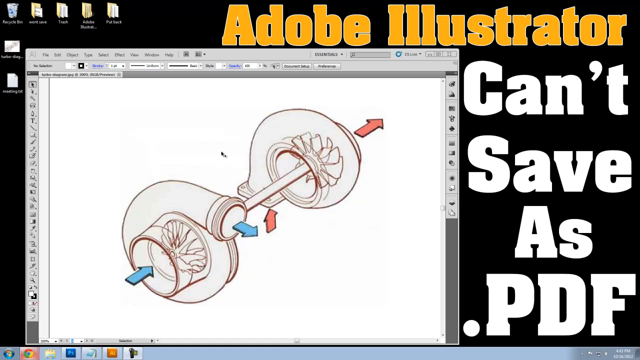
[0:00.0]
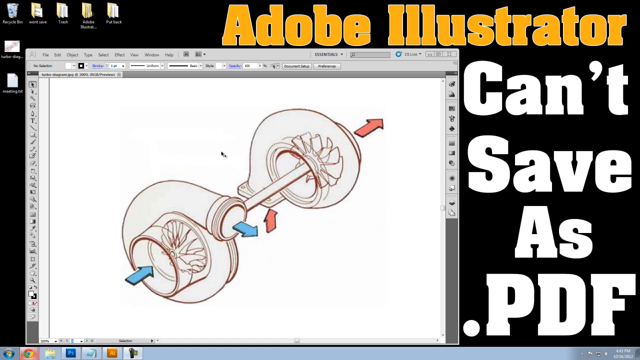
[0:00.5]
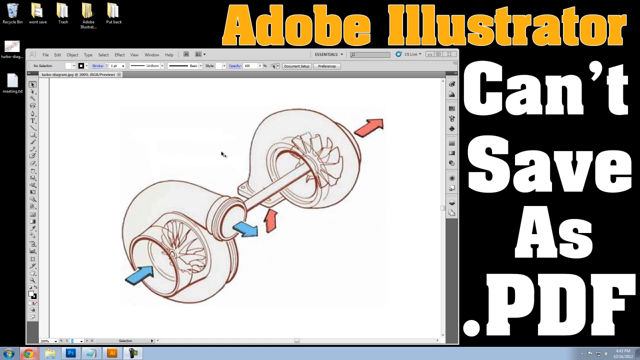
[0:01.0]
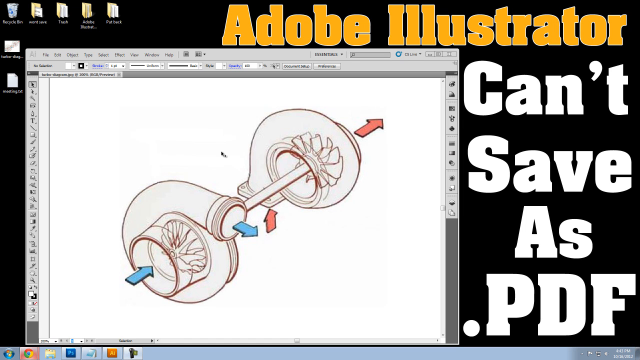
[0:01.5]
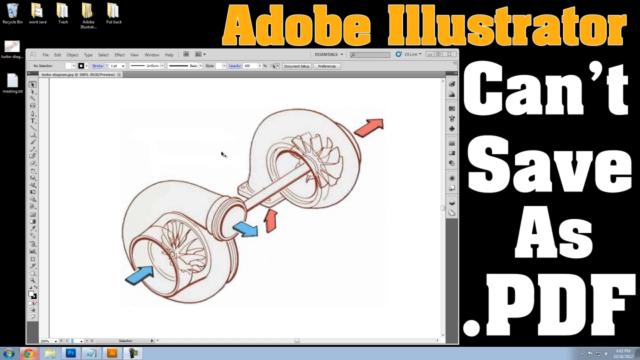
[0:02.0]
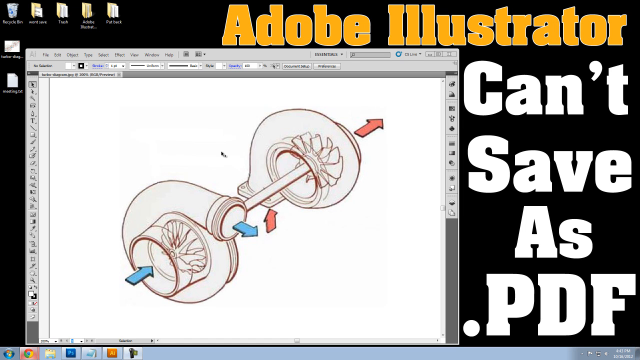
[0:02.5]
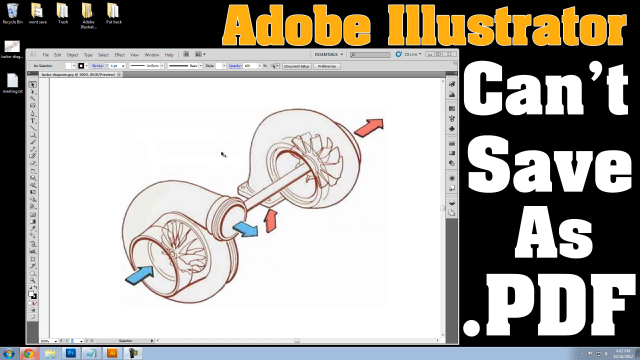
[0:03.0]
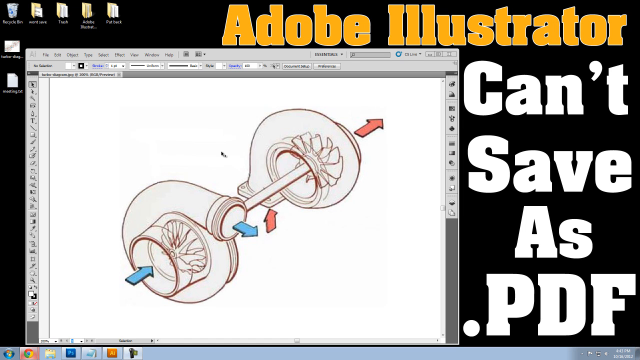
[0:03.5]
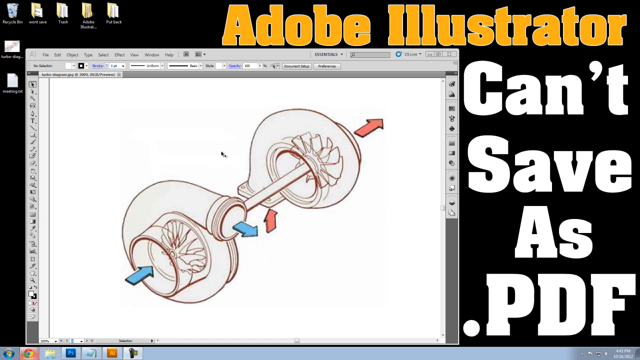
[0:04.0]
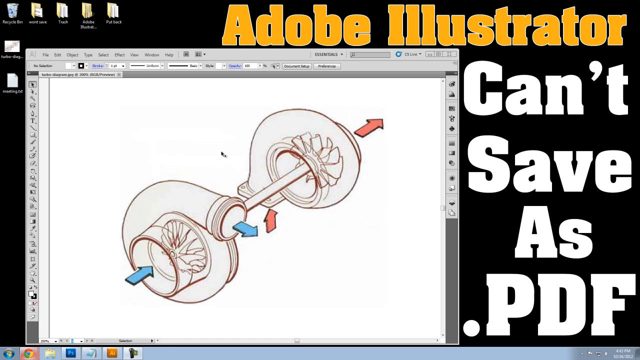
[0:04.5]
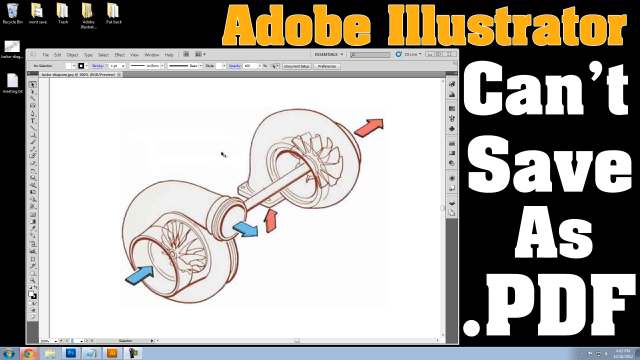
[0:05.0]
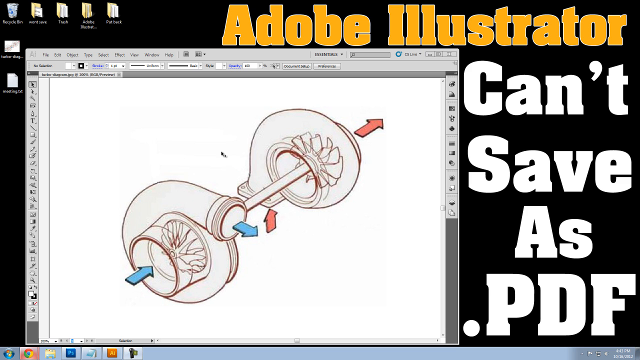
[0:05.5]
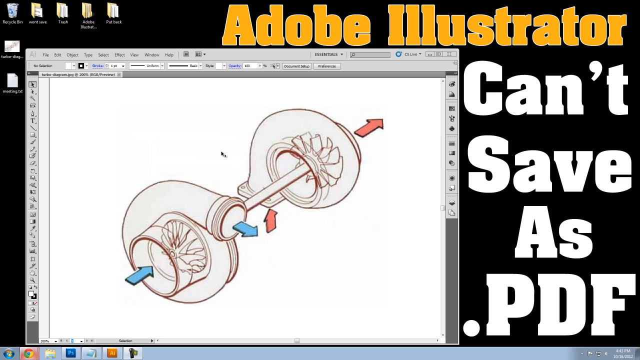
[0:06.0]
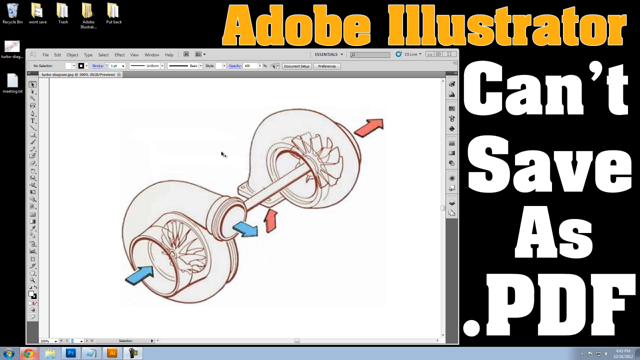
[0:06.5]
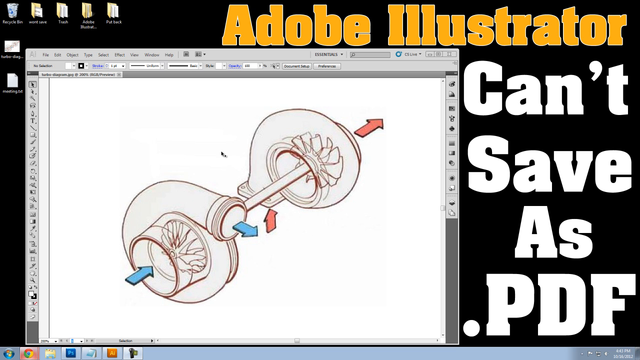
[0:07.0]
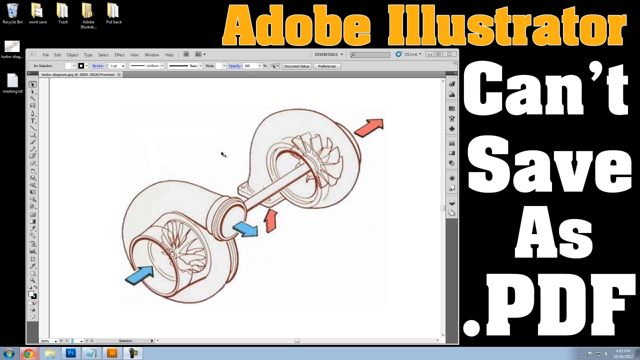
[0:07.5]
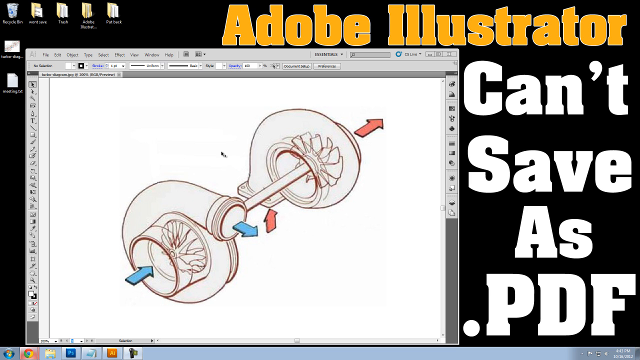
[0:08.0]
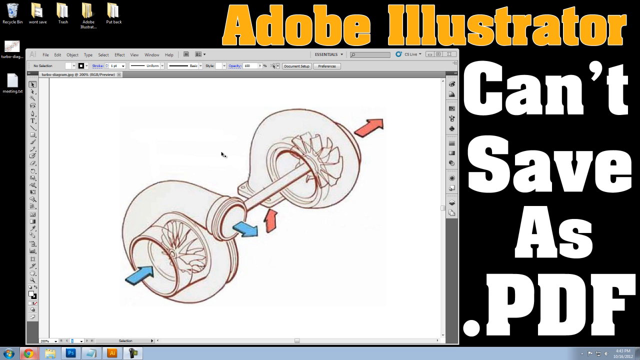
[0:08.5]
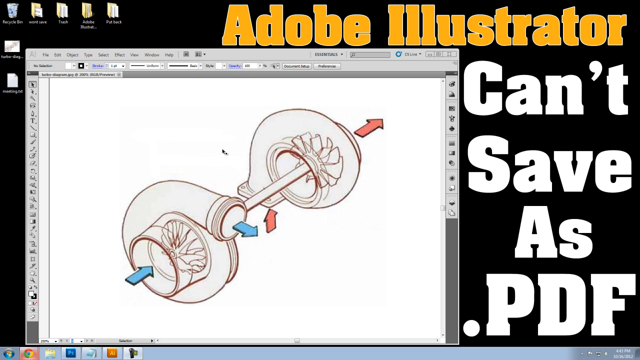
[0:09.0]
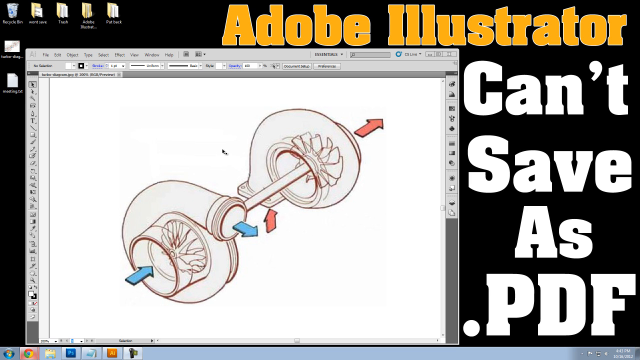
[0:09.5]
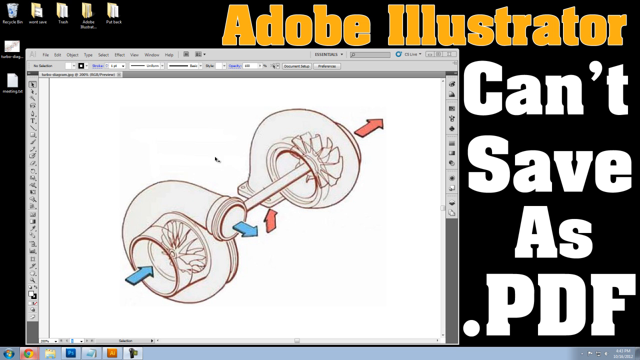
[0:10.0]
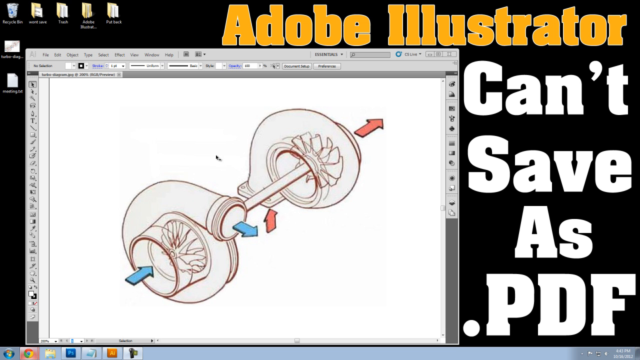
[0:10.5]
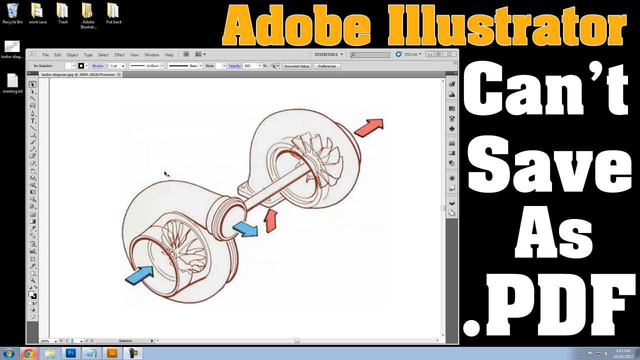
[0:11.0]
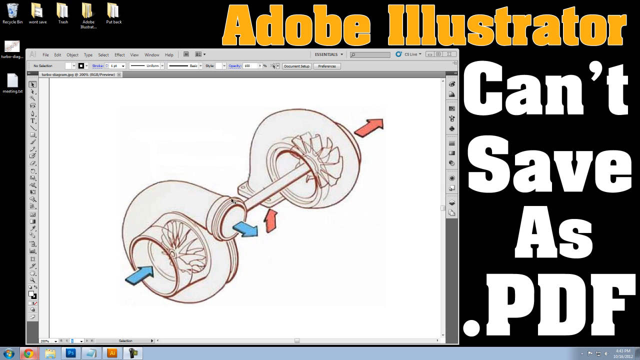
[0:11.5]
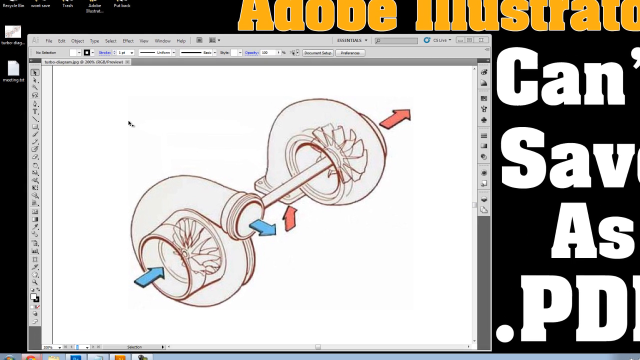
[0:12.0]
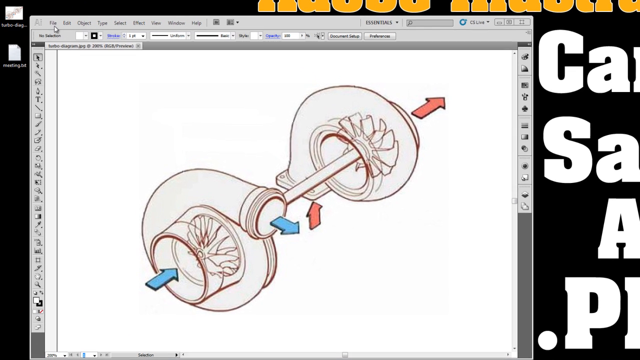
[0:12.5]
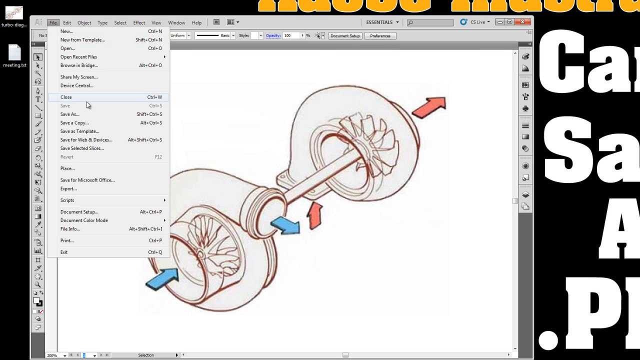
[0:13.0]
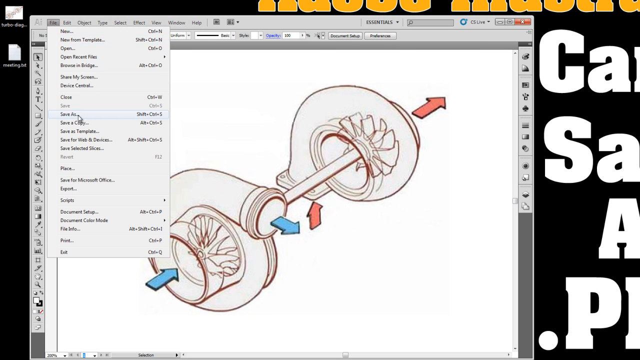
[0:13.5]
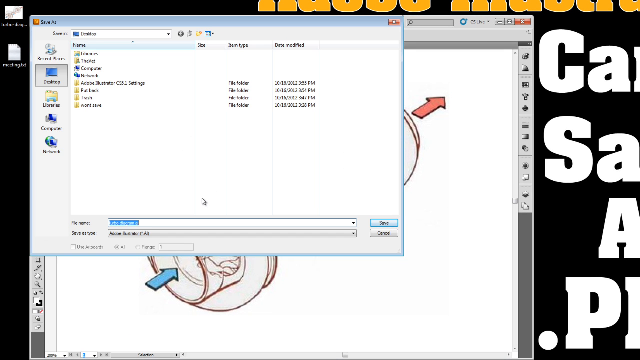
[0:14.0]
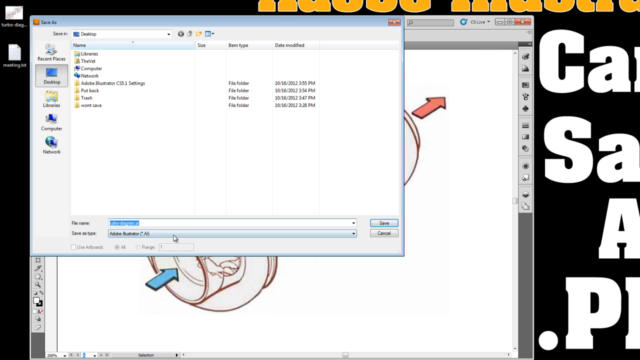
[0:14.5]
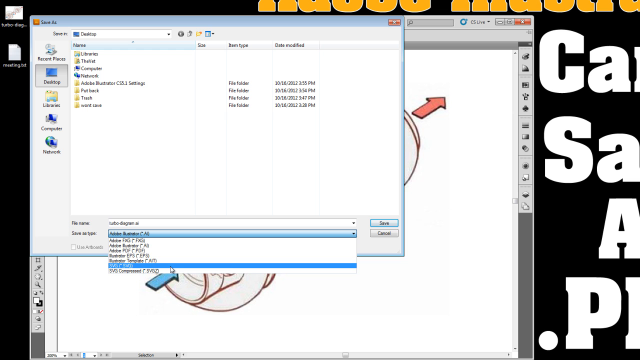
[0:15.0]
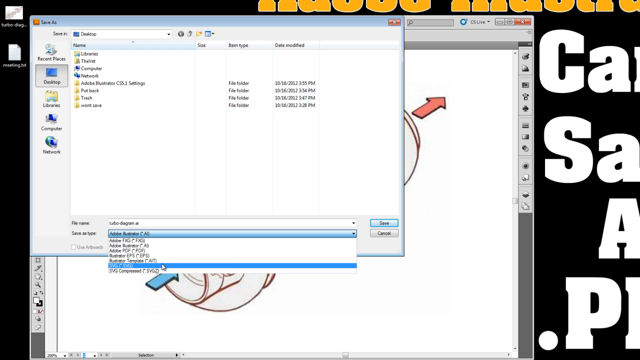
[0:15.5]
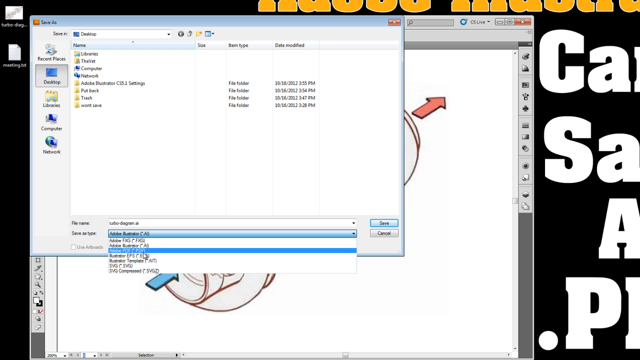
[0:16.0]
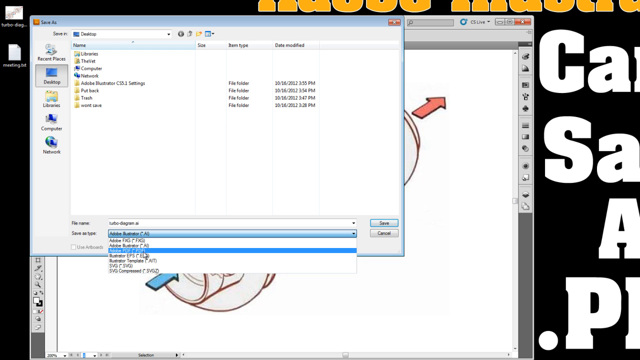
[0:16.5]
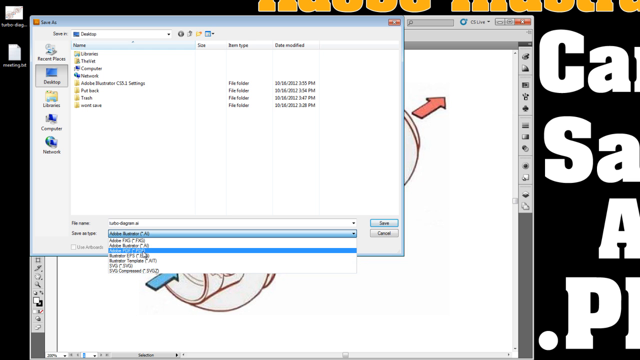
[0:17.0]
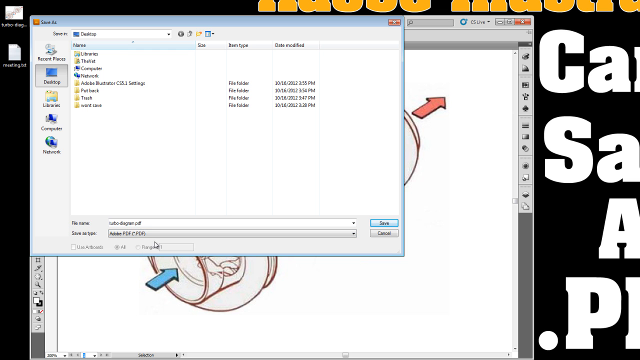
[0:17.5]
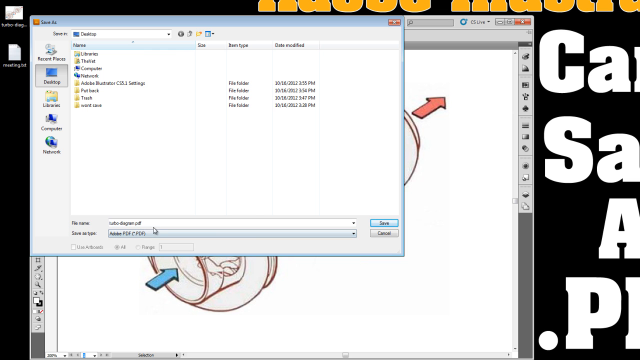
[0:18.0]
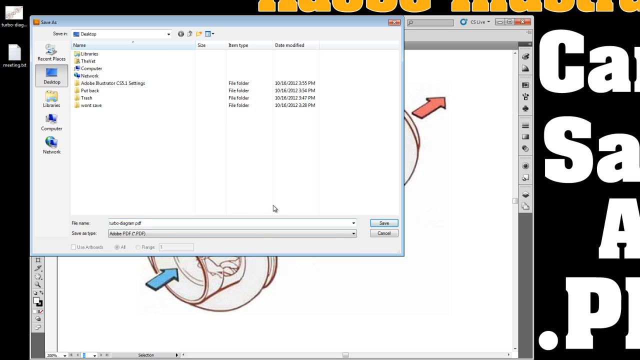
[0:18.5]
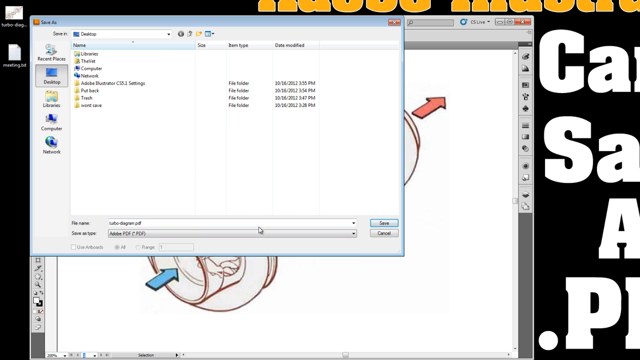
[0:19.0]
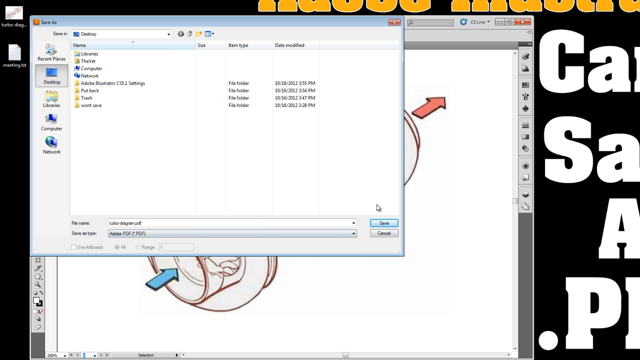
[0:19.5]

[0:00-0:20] The video begins with what looks like an AutoCAD drawing of some kind of turbine or fan in a window on a computer screen. A caption on the rest of the screen, around the window with the diagram, reads "Adobe Illustrator can't save as PDF", suggesting a technical advice video for Illustrator users who want to save documents as PDF. At first the view stays on the computer screen while a mouse pointer moves over it. A menu then opens, and someone tries to export the drawing, probably as a PDF. The text on the screen is small and moves quickly. The mouse pointer jiggles about.